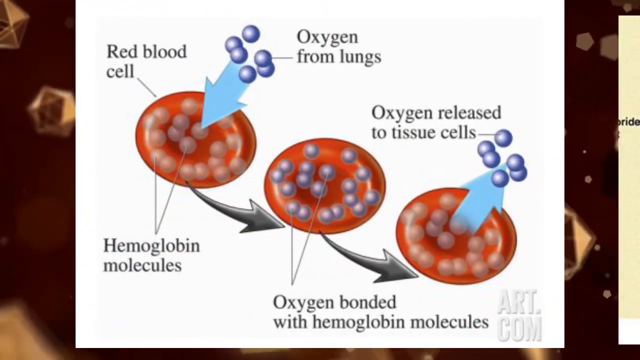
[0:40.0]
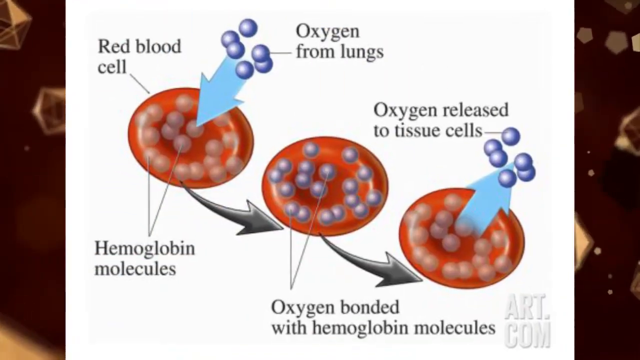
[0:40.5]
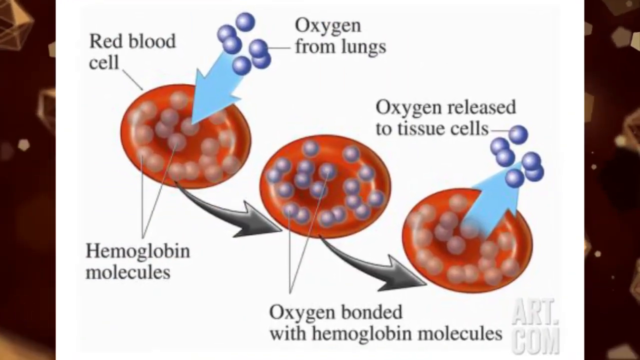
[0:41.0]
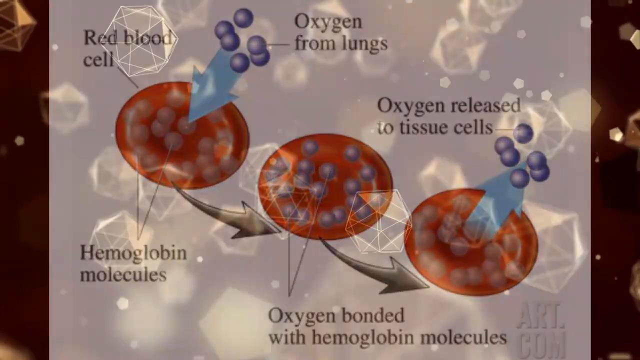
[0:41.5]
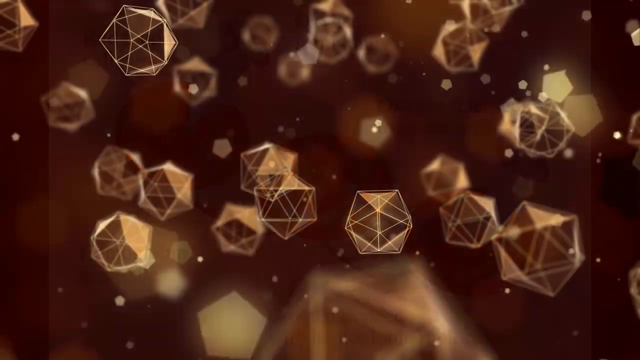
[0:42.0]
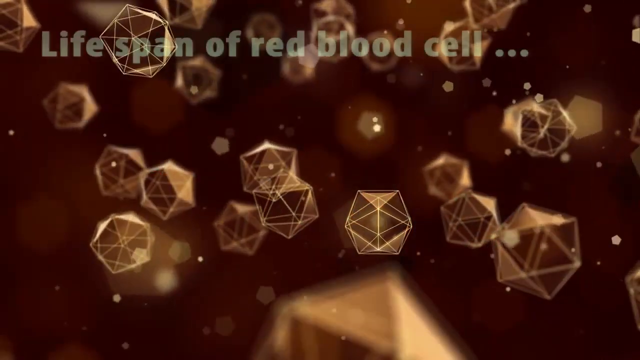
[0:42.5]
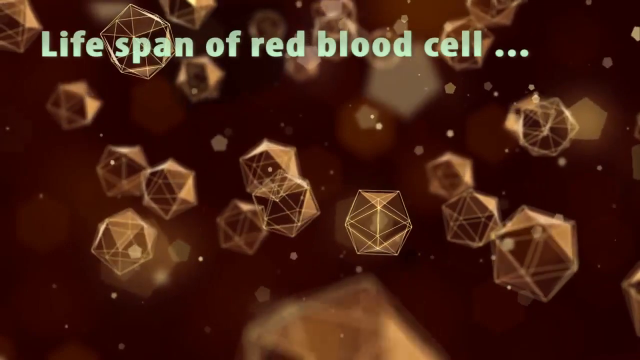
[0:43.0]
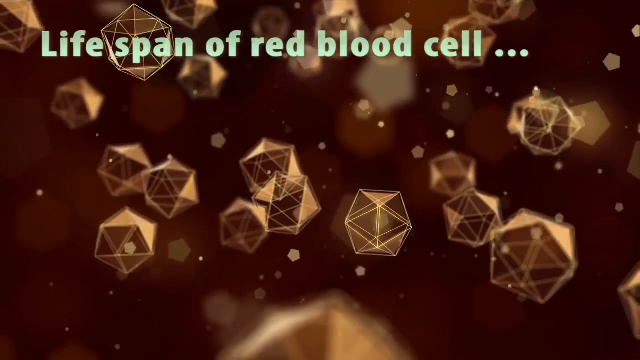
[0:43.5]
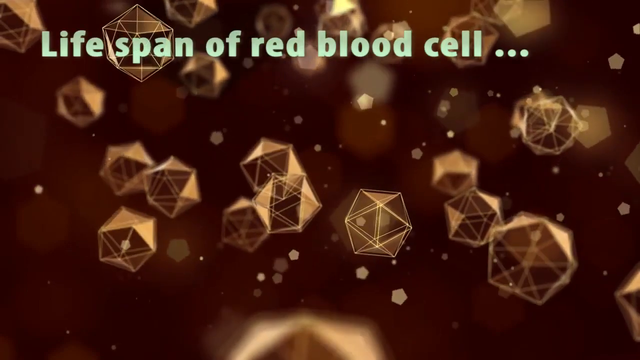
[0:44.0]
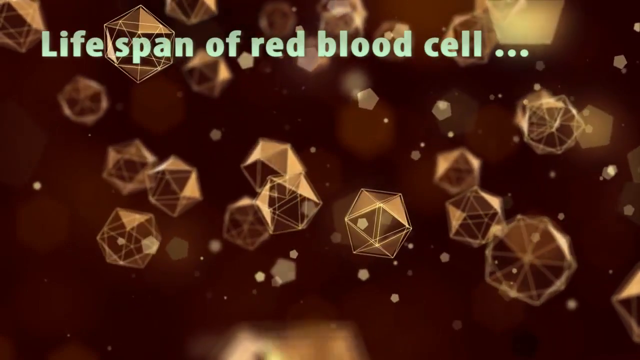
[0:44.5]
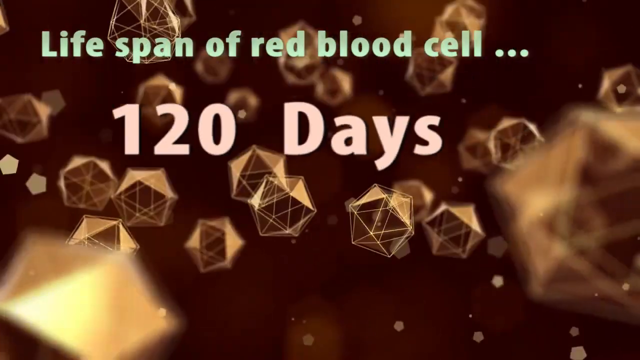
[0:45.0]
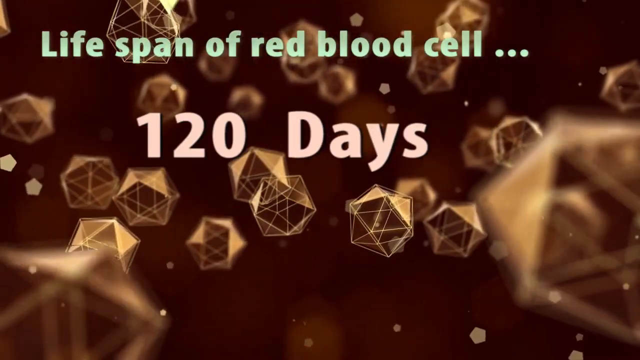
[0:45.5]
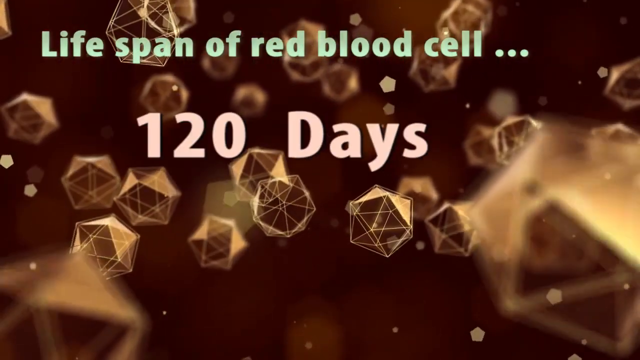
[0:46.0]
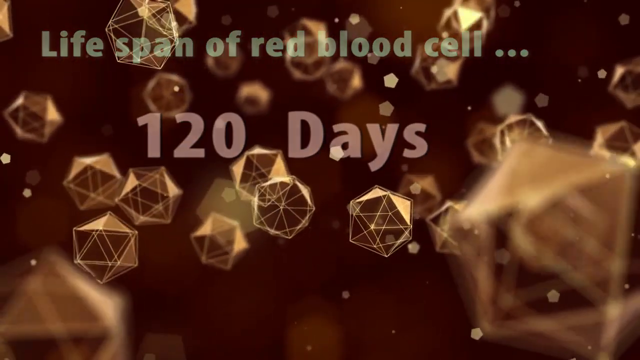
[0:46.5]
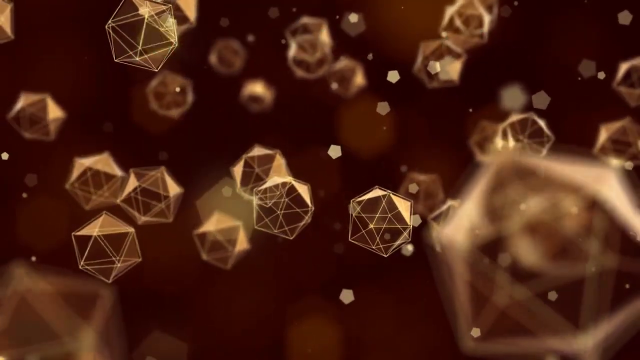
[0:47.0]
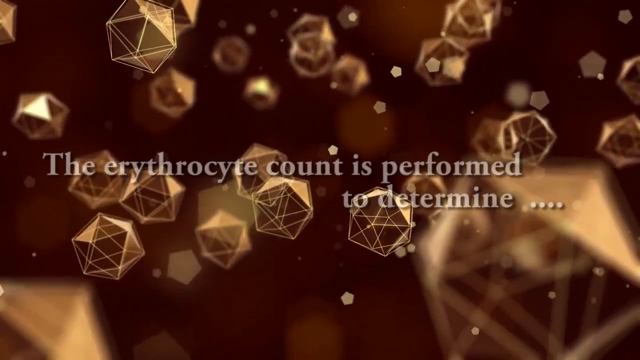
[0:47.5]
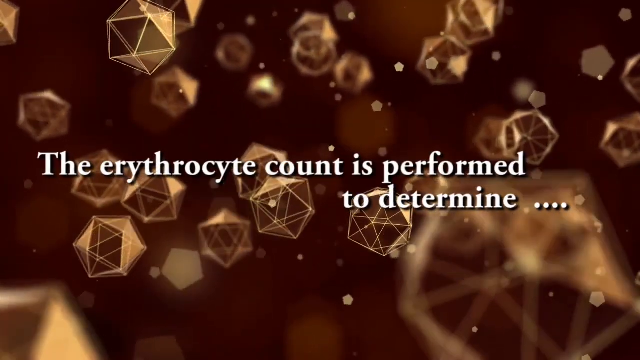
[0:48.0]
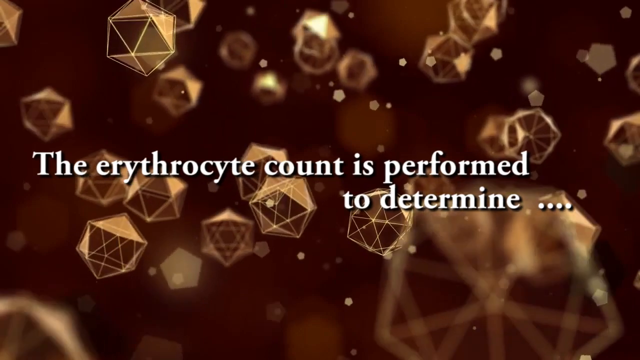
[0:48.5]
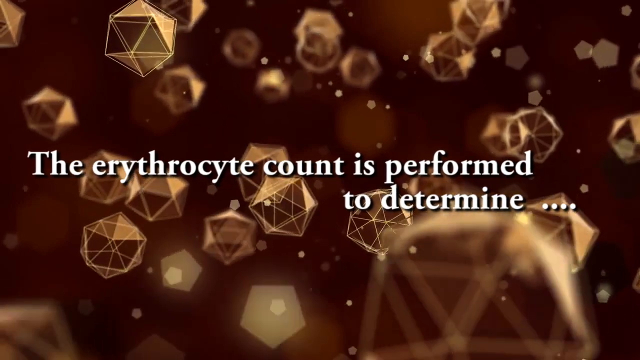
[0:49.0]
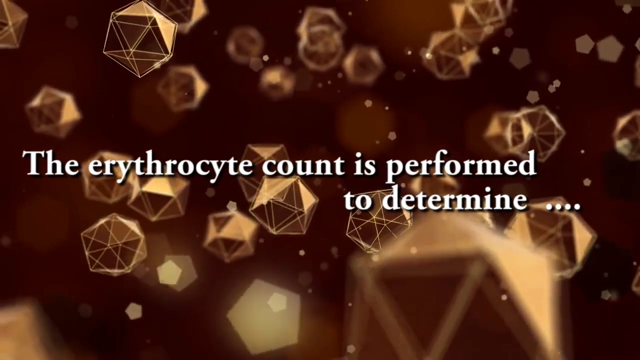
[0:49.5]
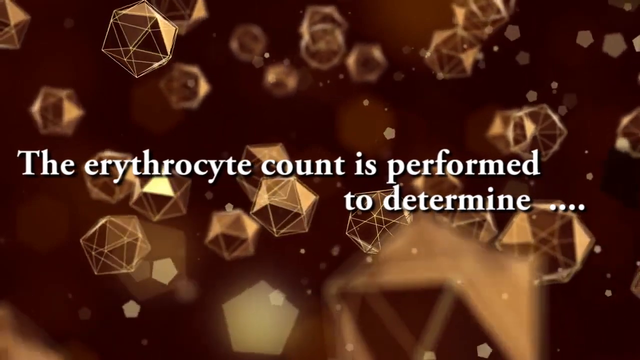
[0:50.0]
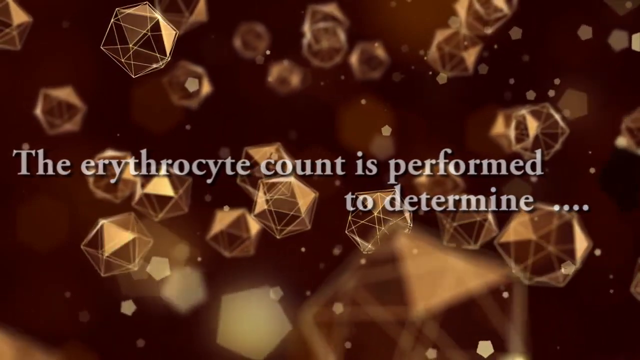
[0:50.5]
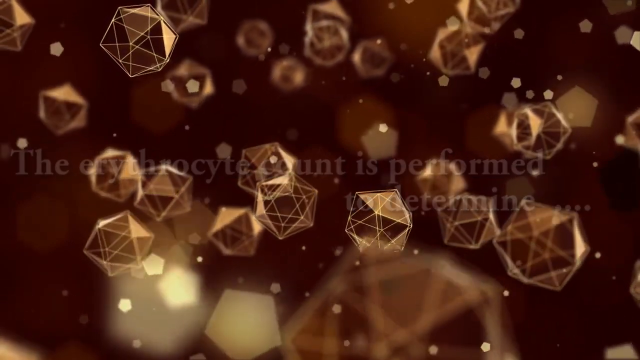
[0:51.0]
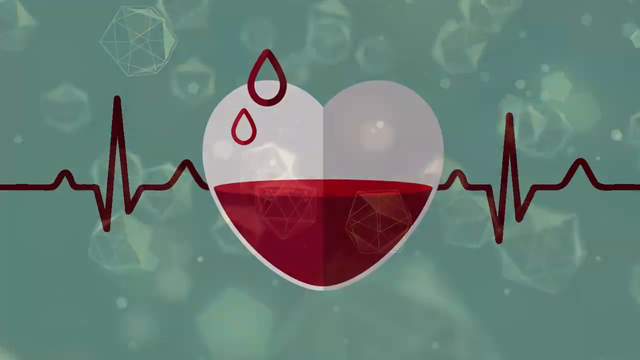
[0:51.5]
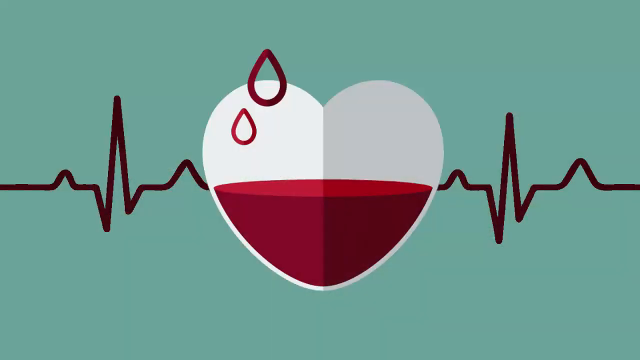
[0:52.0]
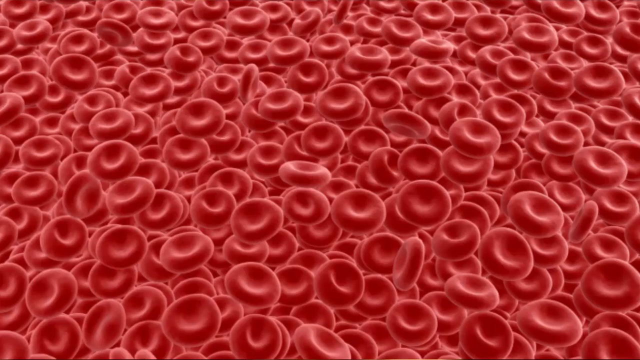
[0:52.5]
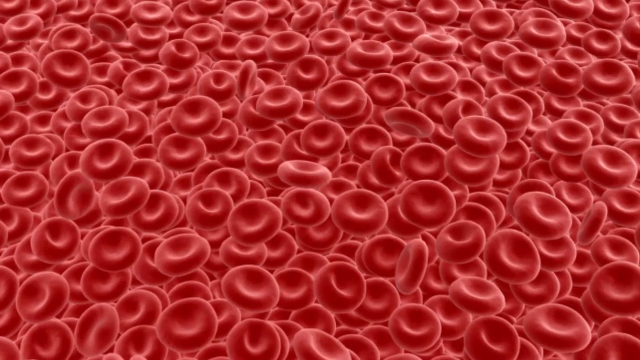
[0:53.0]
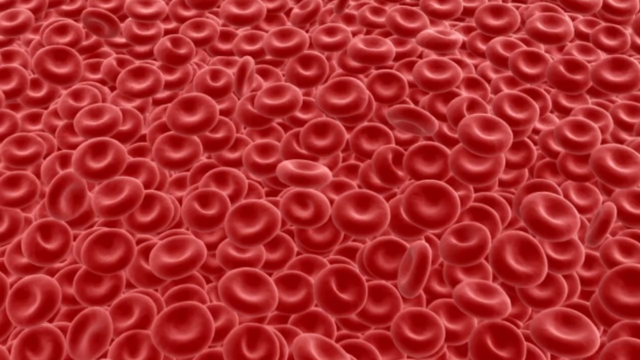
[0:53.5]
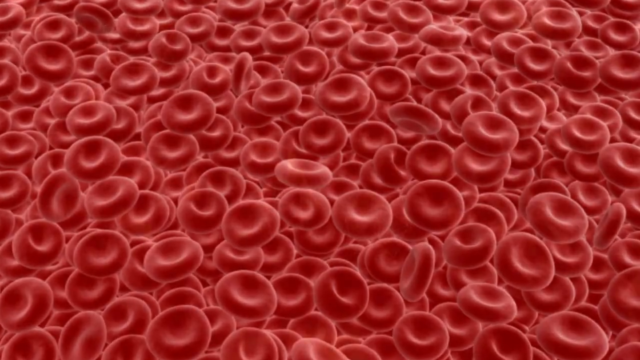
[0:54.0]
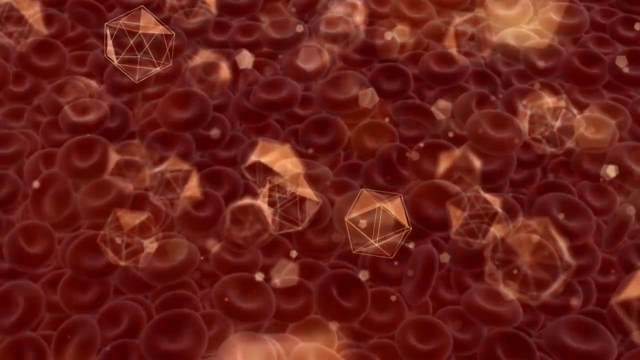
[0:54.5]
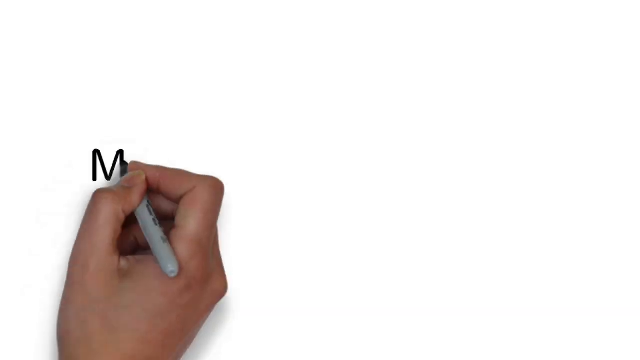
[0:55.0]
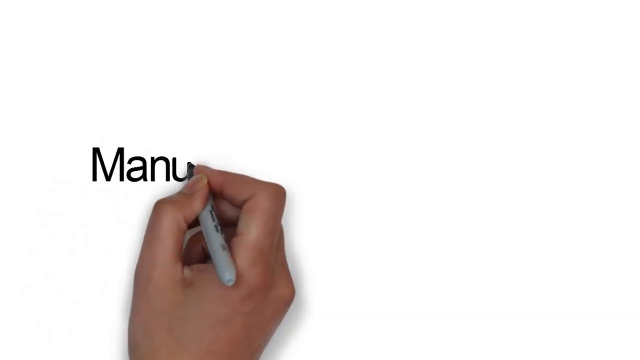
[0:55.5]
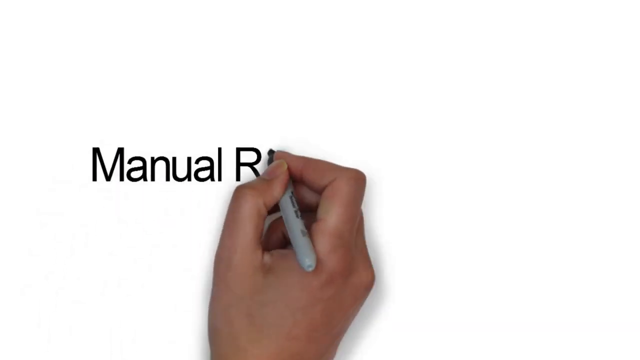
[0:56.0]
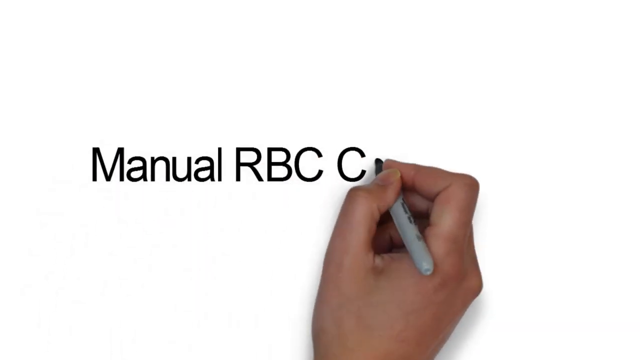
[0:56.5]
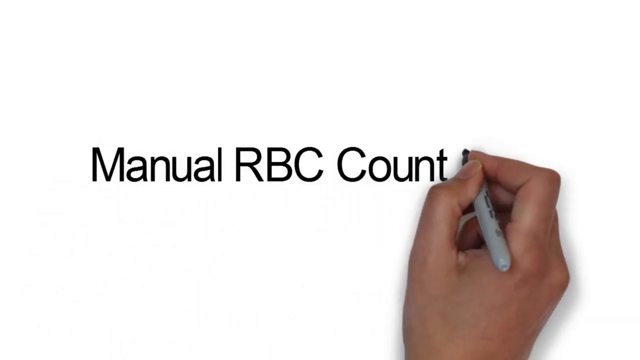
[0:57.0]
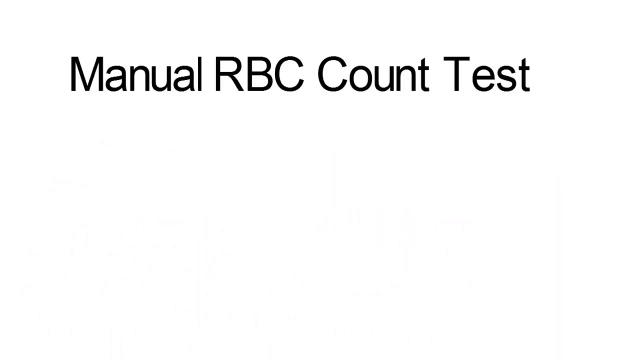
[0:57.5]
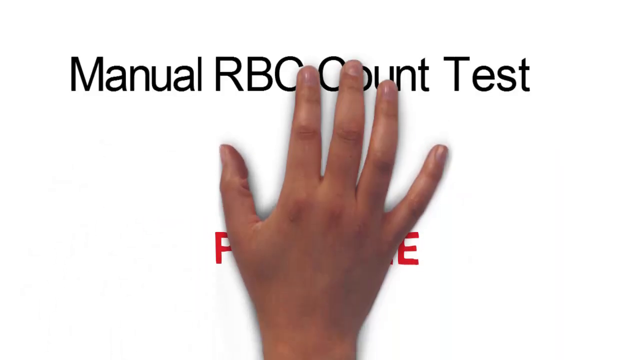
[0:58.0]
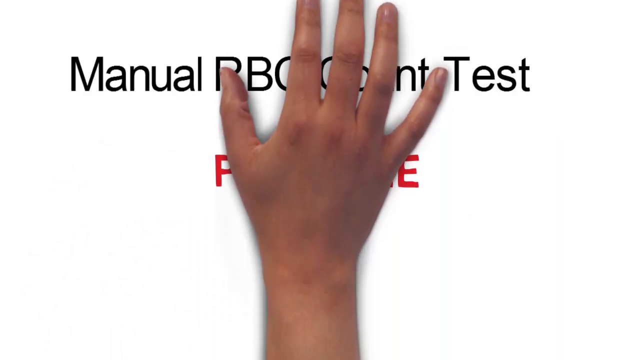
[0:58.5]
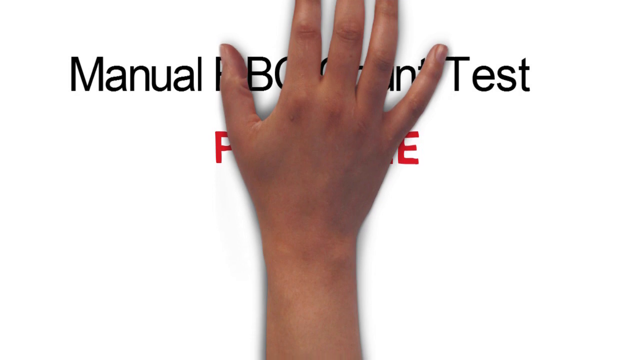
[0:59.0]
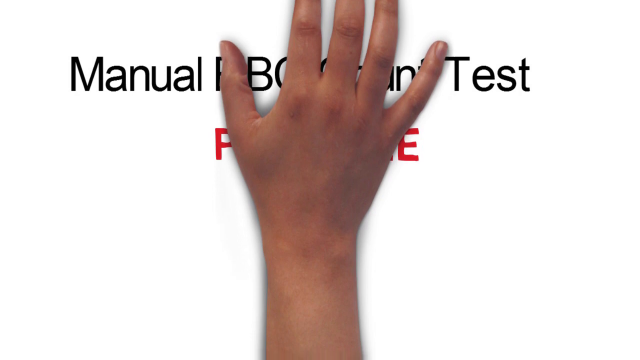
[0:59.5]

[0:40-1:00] The video shows the process of a red blood cell accumulating oxygen, then moving that oxygen to another place and releasing it thanks to hemoglobin molecules. Next comes a brownish background with odd shapes spinning around, and text states that the lifespan of a red blood cell is 120 days, followed by words beginning "the erythrocyte count is performed to determine". Images follow: a heart full of blood, which seems to indicate a problem, then a photo of red cells. A hand then draws and writes "manual RBC count test", and the hand then writes a word in red, but the word is hidden by the hand.